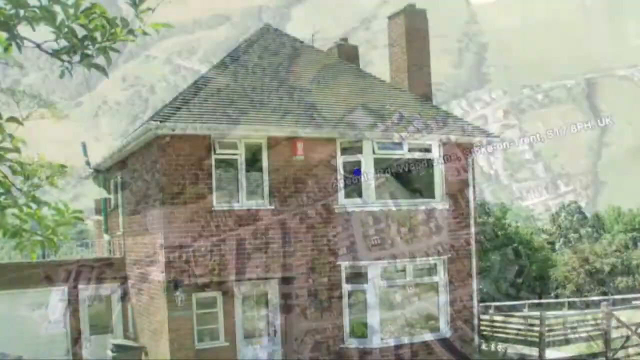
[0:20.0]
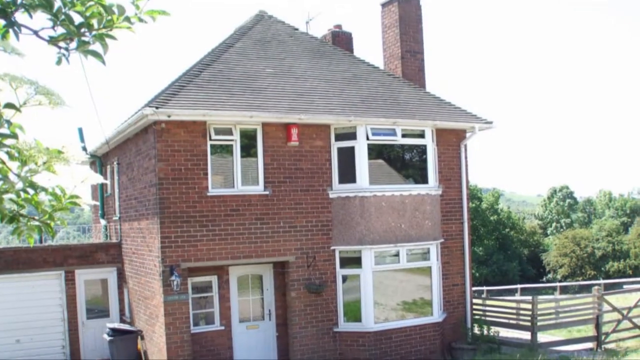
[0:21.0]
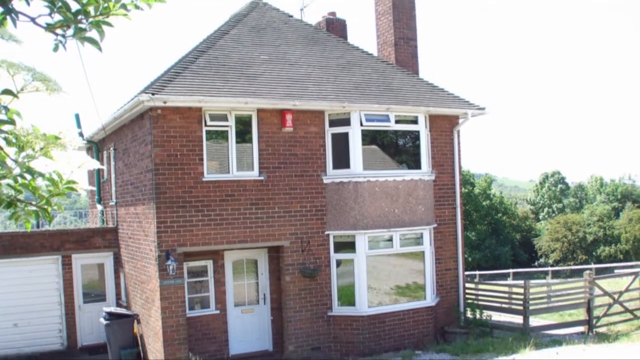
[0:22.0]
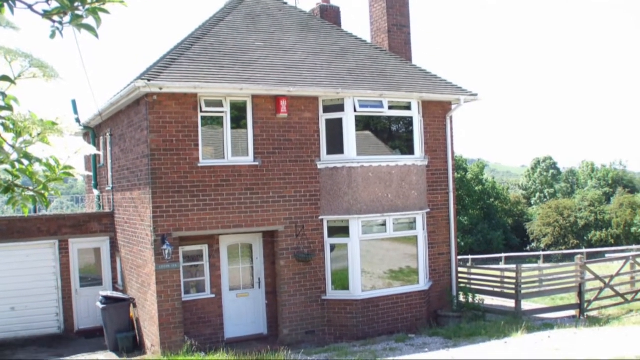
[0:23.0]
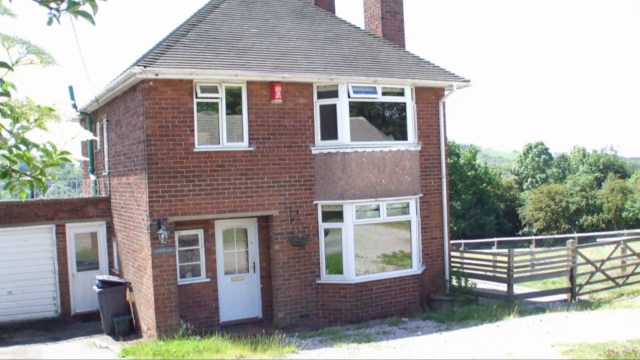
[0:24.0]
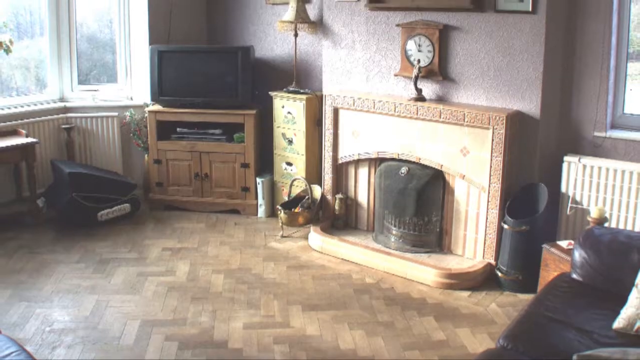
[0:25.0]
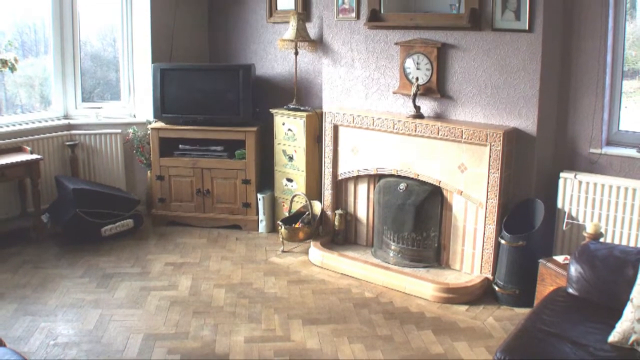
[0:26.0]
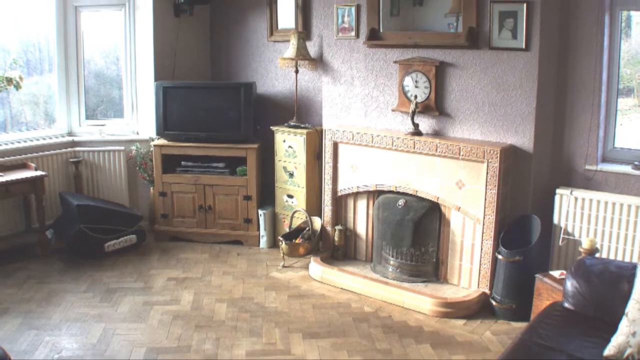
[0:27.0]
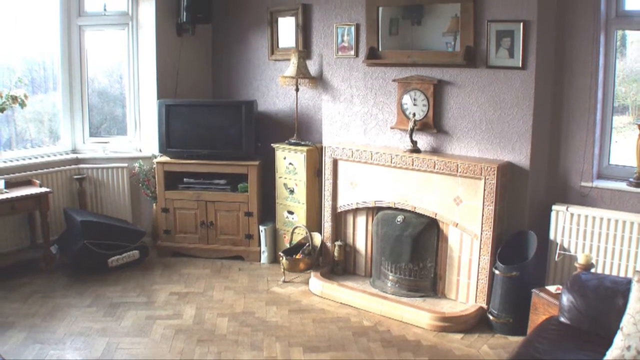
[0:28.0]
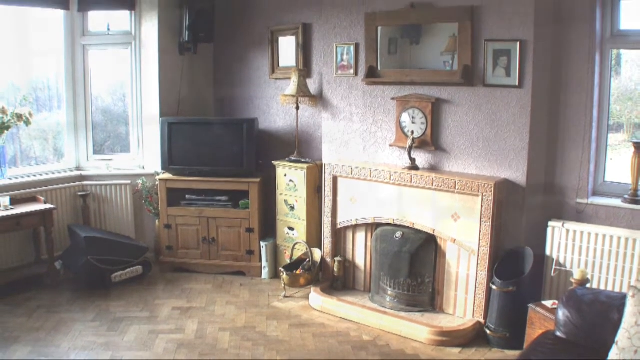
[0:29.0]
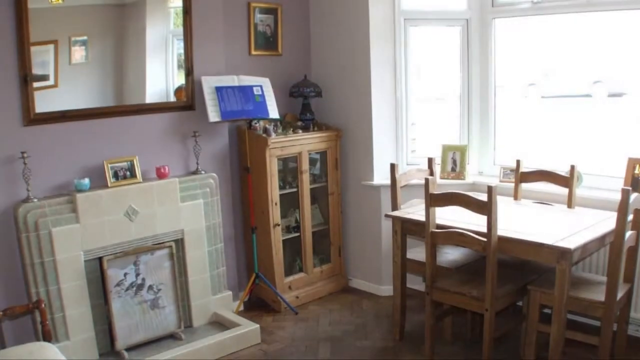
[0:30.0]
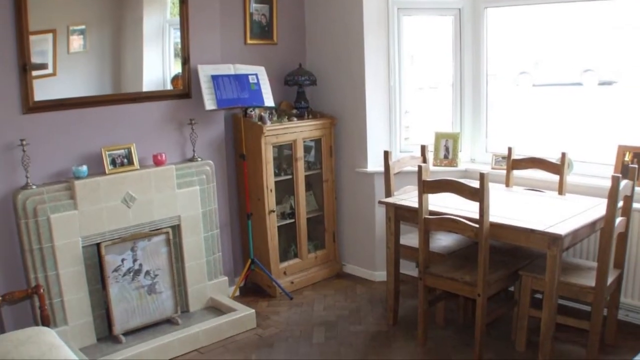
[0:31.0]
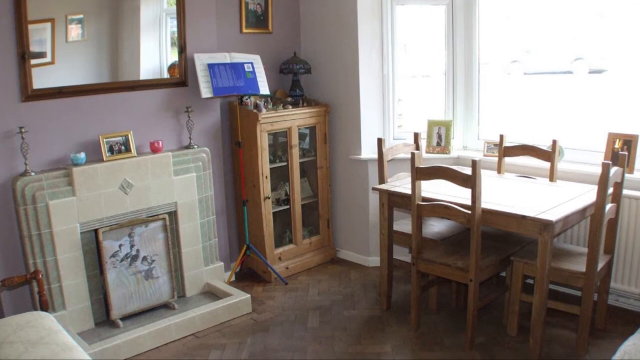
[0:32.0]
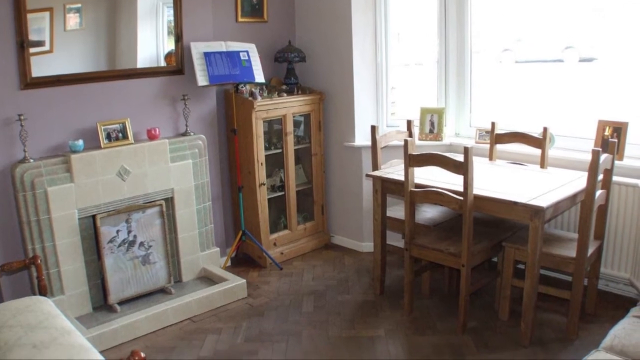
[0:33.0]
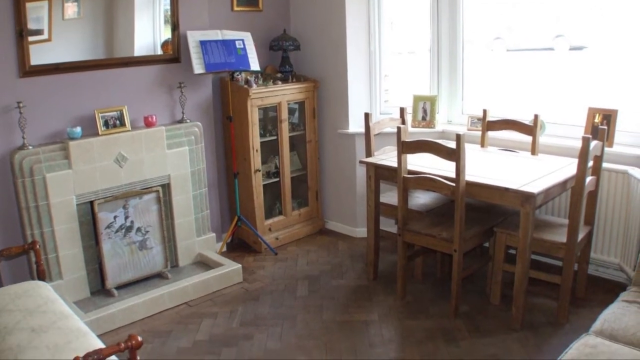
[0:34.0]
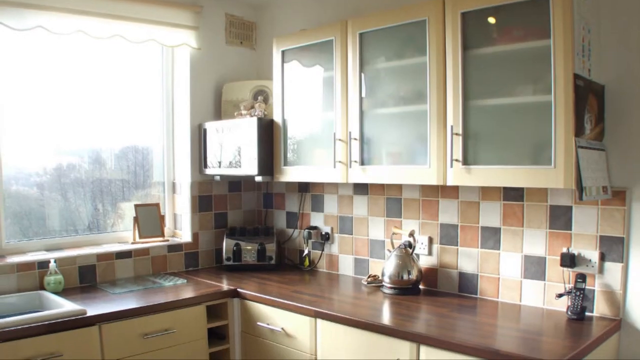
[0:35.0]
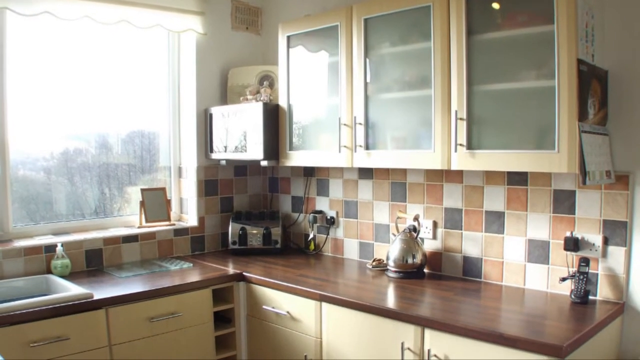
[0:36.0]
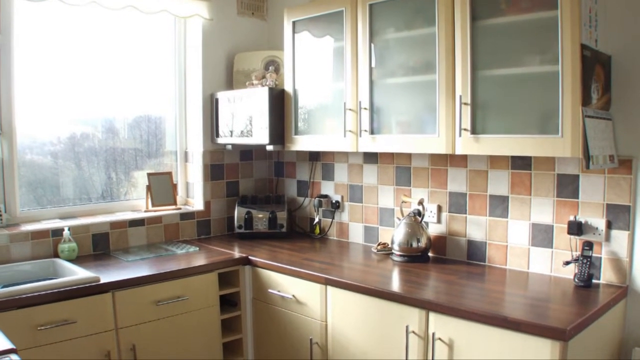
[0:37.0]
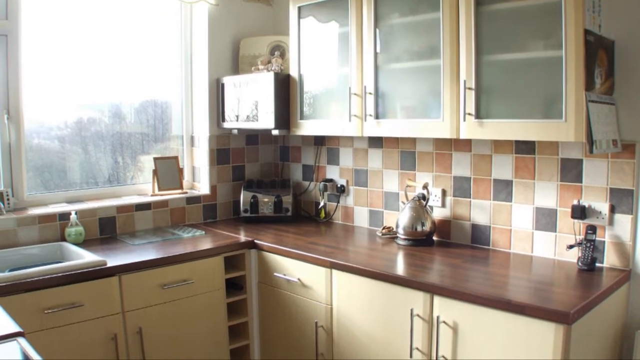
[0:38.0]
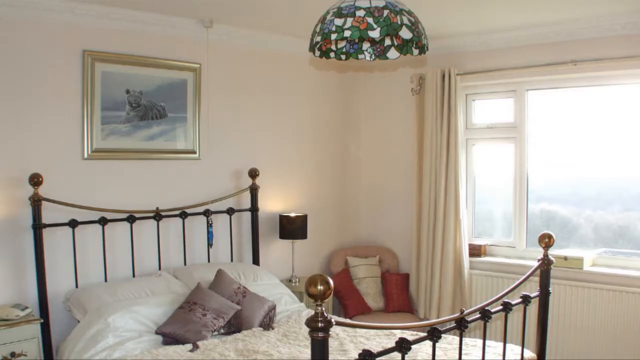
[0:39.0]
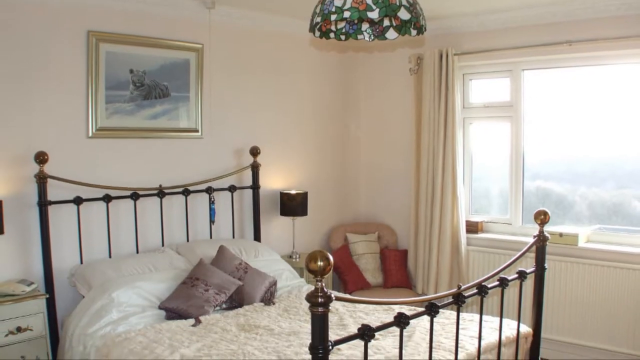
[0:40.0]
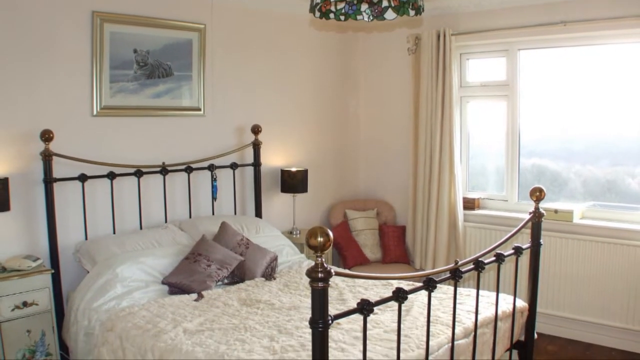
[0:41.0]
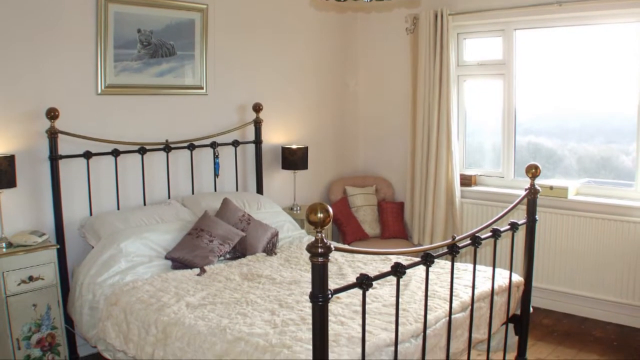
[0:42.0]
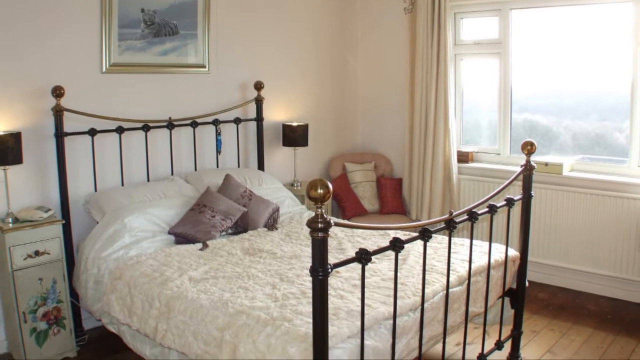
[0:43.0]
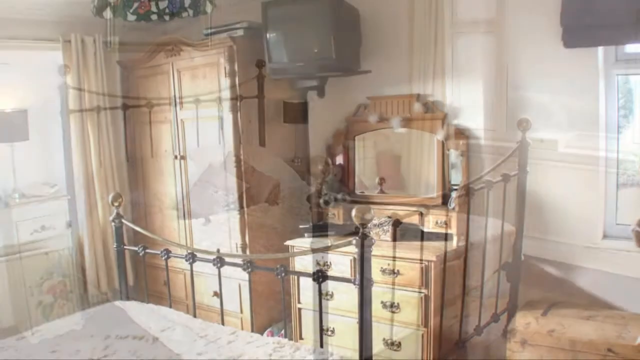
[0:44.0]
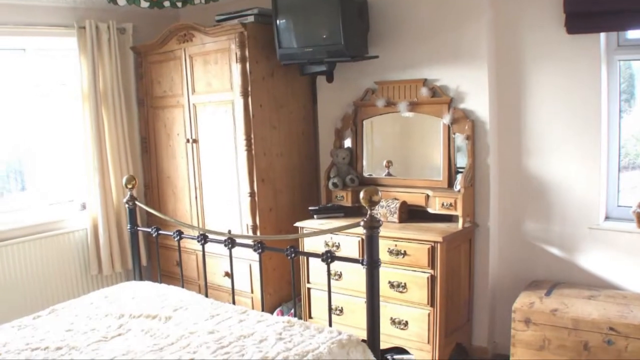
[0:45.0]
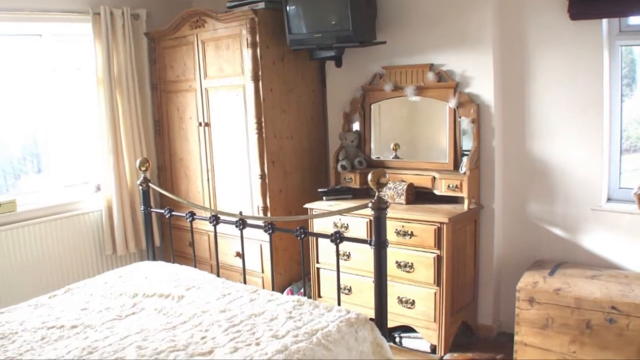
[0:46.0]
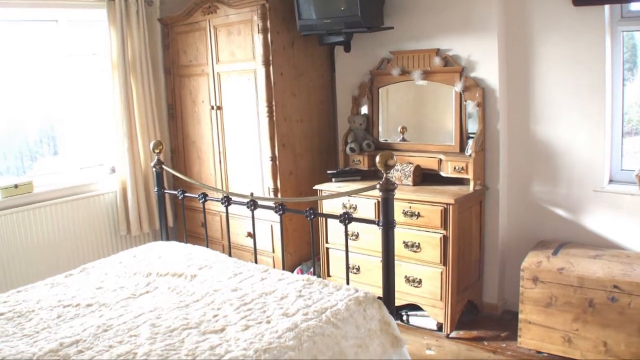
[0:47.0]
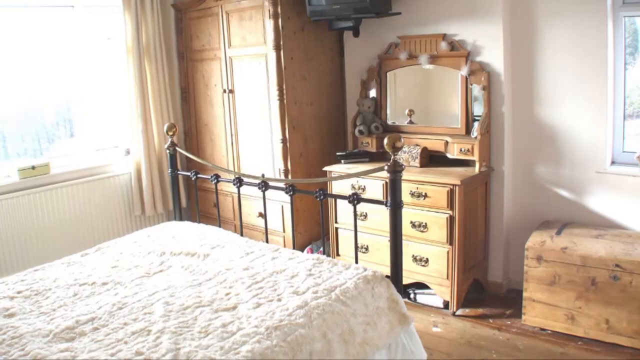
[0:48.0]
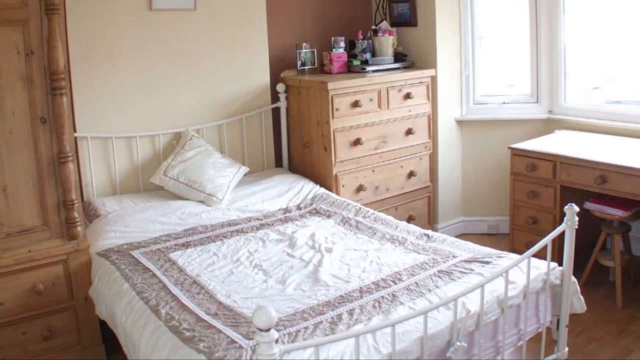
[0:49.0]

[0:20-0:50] The view starts on the exterior of a two-story brick home with a peaked roof. The building is almost square. The facade is entirely brick except around the window trim, which is white painted wood. The front door is on the left: a single-panel door with a cutout for a window, and the top of the window is slightly arched. A bay window is on the right-hand side on both the first and second floors. The house has two chimneys, so it might perhaps be a two-family home, though it looks like only one. On the left are the door and a small single-panel window, and upstairs there is a double-pane window. The roof is shingled and forms a peaked triangle.